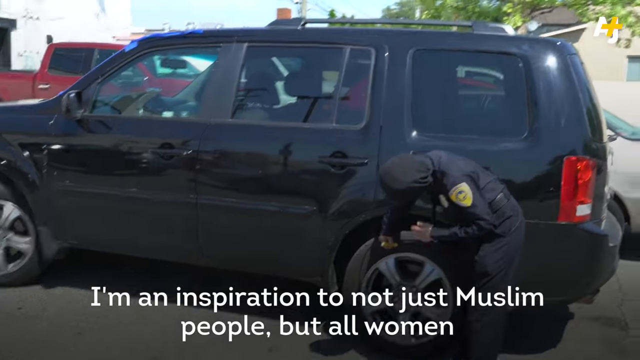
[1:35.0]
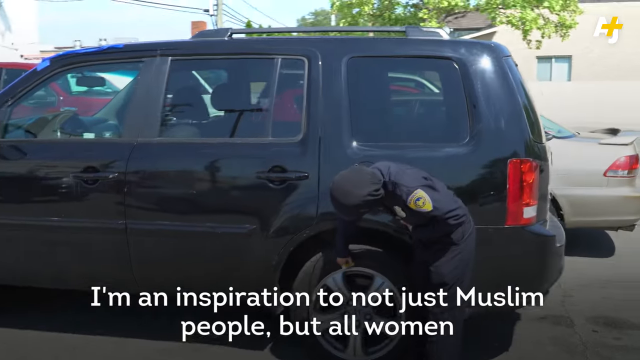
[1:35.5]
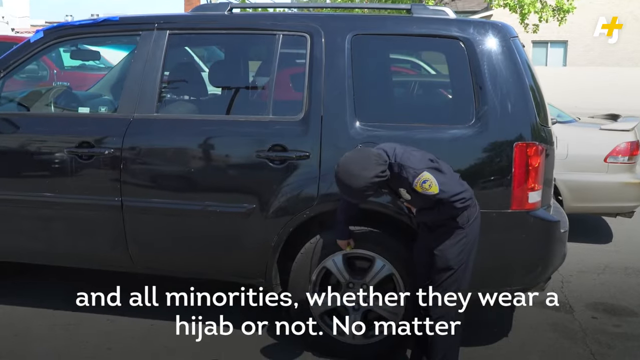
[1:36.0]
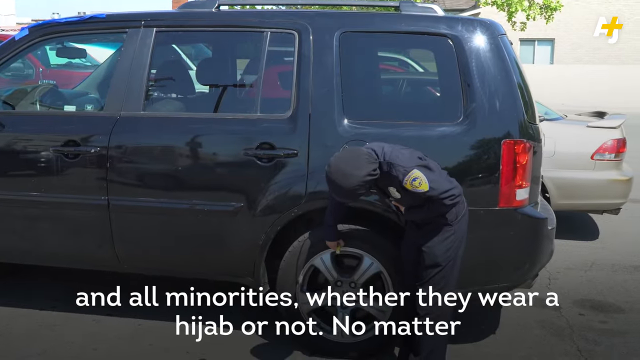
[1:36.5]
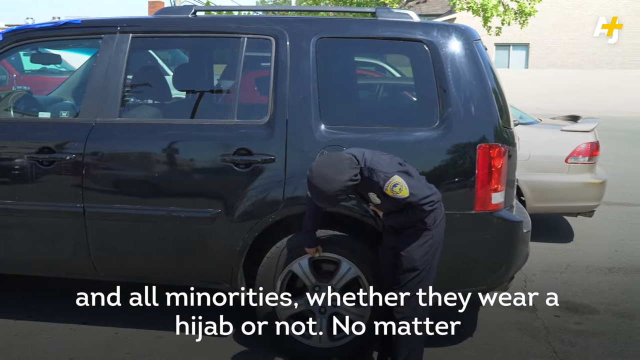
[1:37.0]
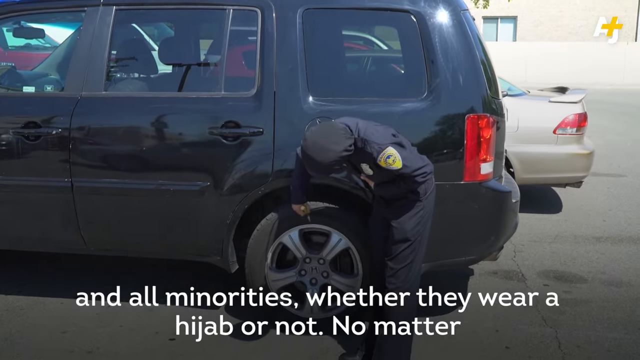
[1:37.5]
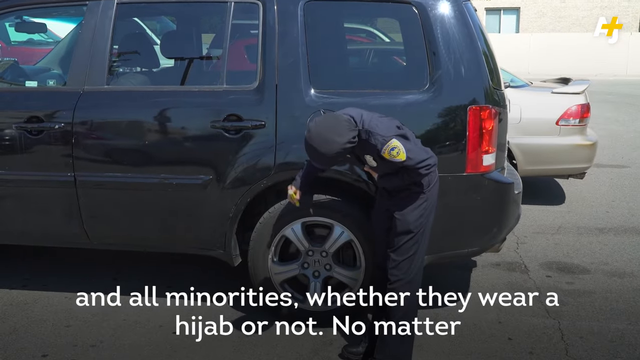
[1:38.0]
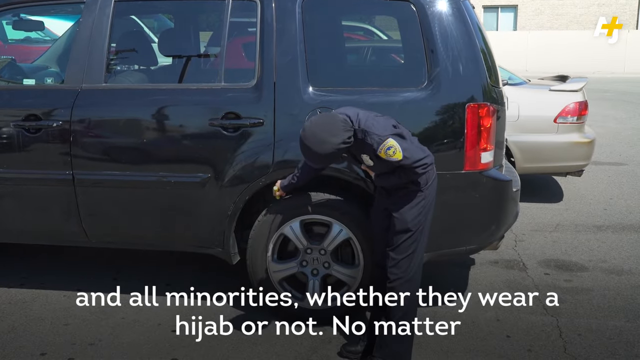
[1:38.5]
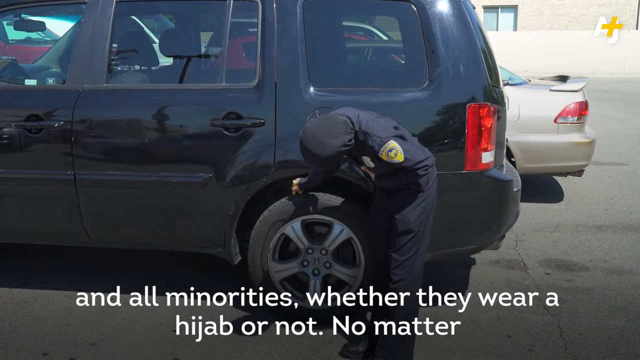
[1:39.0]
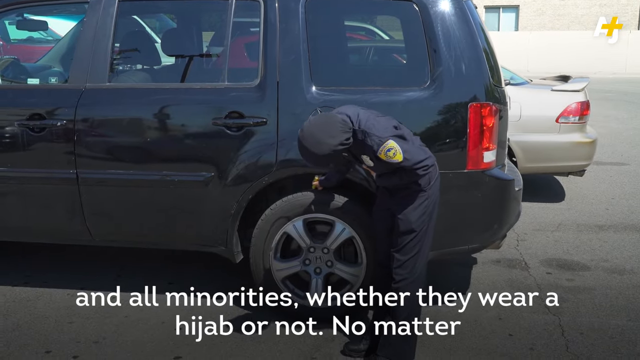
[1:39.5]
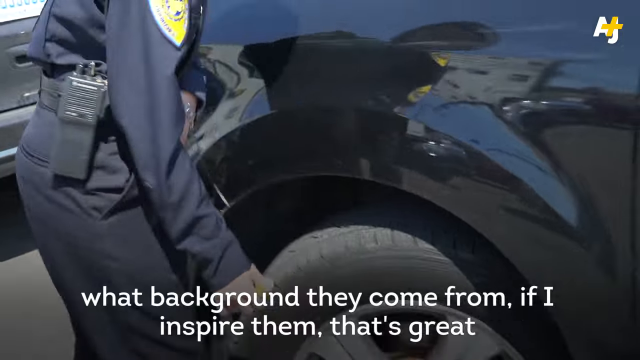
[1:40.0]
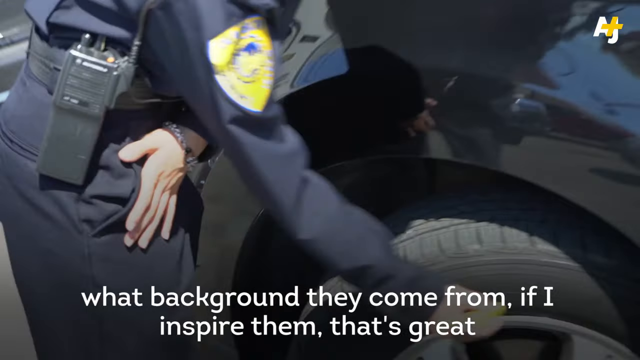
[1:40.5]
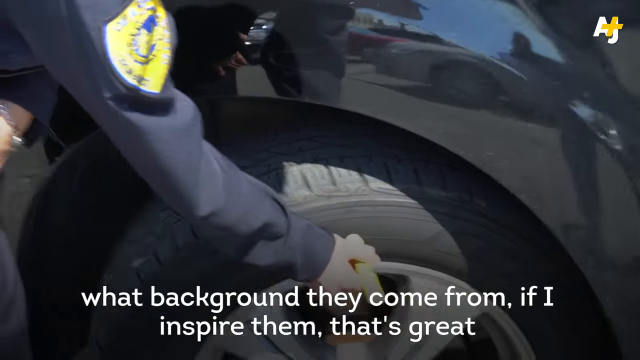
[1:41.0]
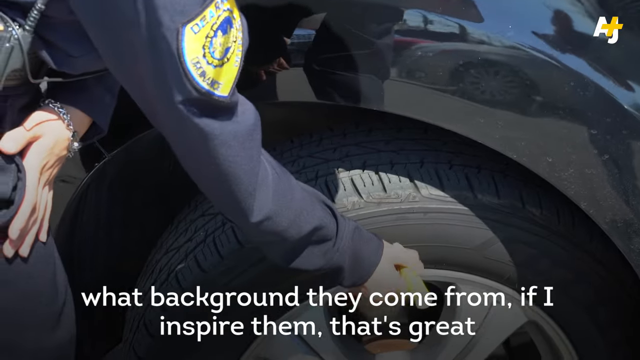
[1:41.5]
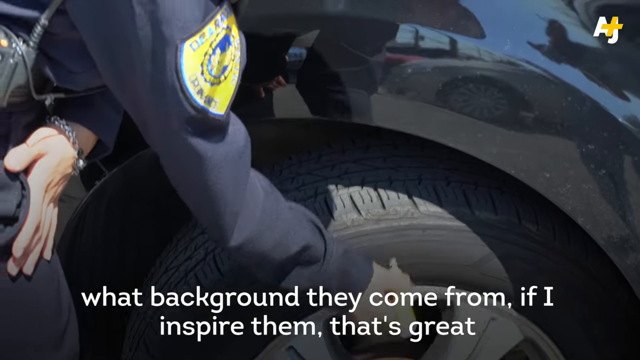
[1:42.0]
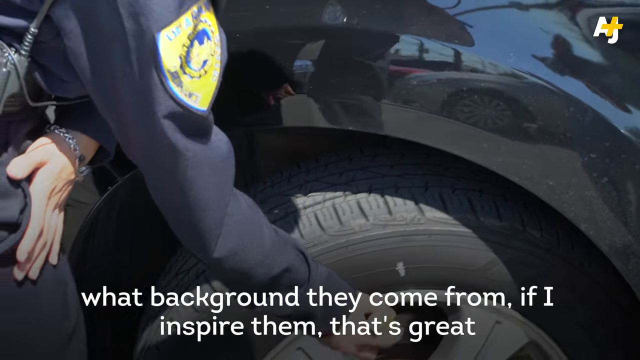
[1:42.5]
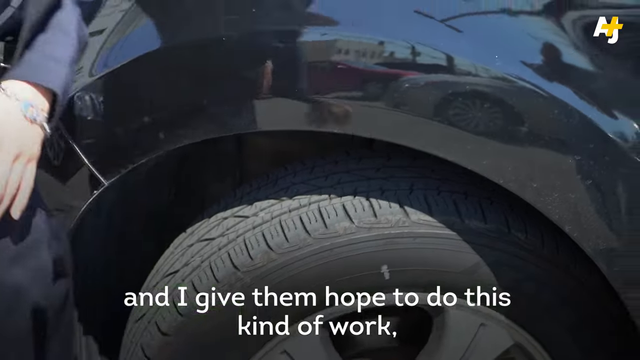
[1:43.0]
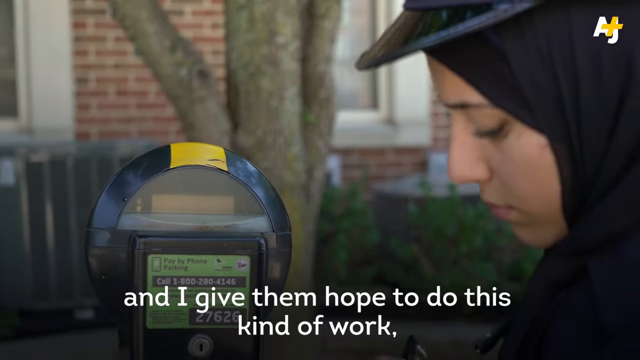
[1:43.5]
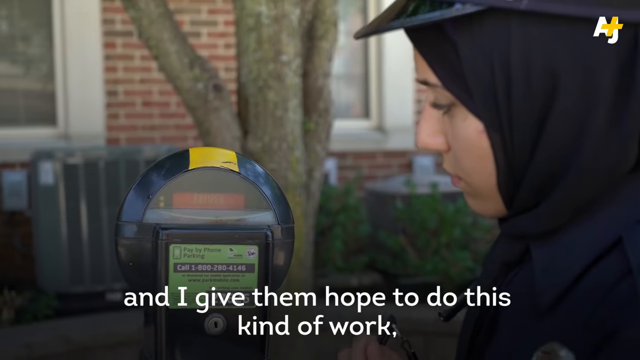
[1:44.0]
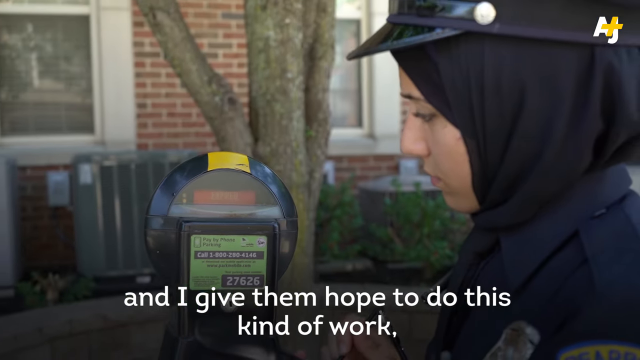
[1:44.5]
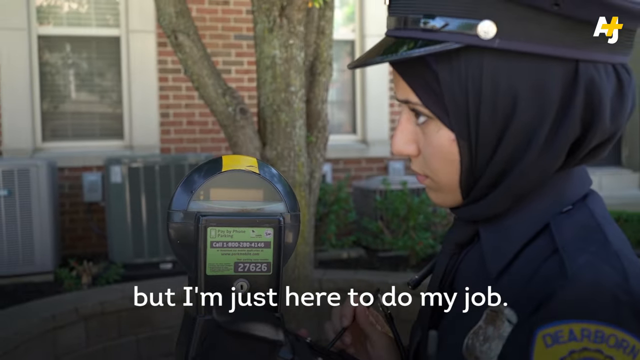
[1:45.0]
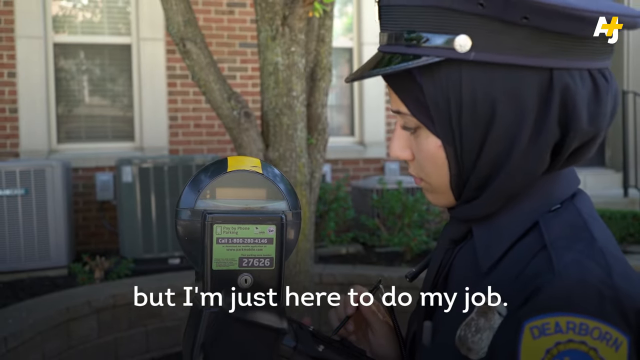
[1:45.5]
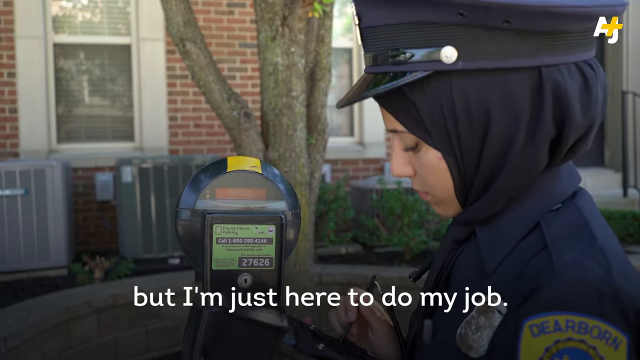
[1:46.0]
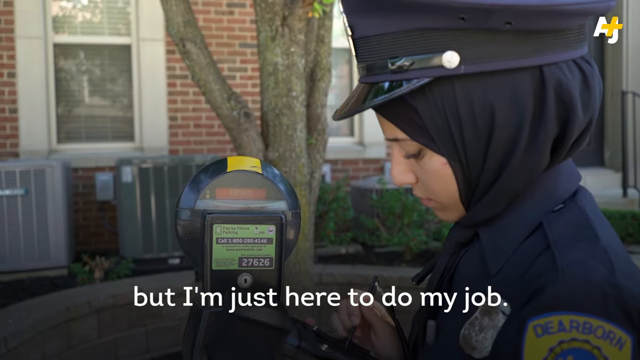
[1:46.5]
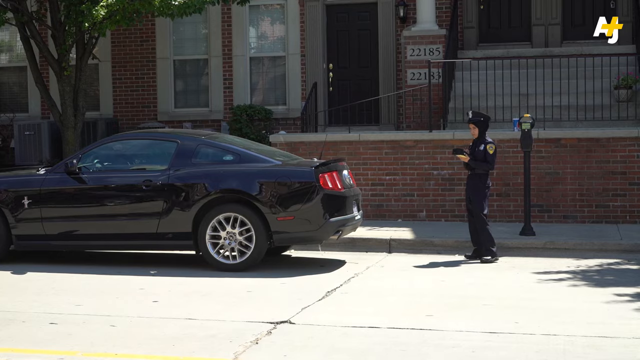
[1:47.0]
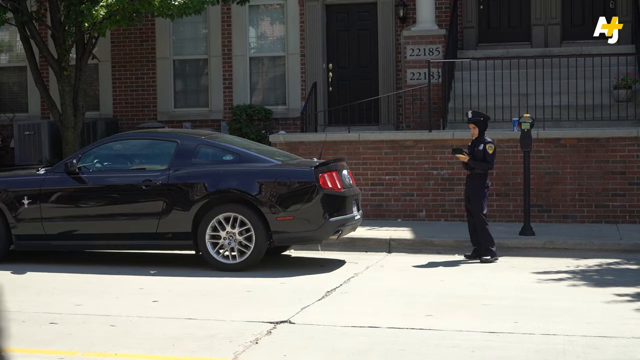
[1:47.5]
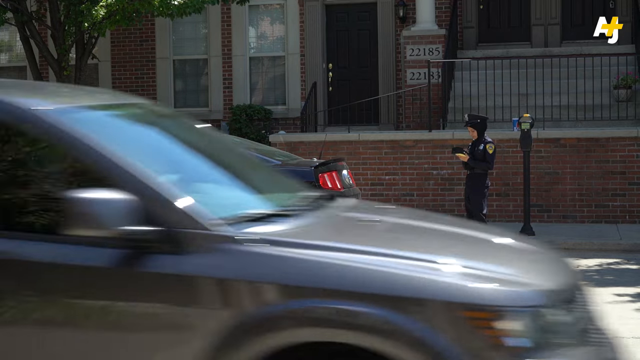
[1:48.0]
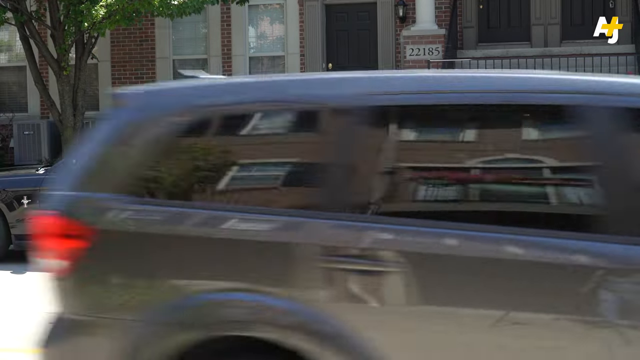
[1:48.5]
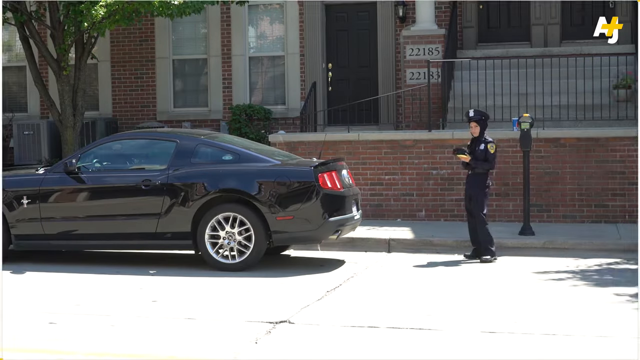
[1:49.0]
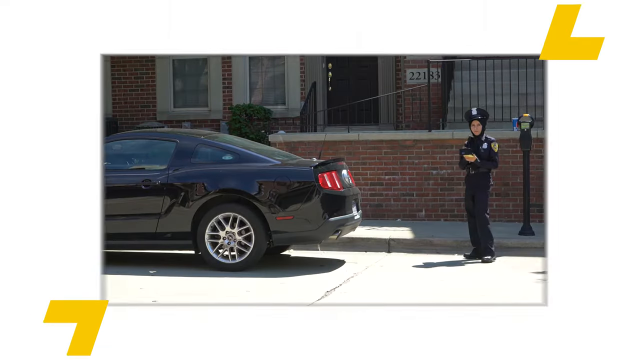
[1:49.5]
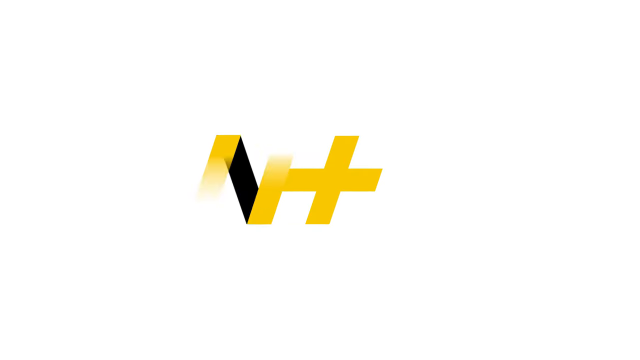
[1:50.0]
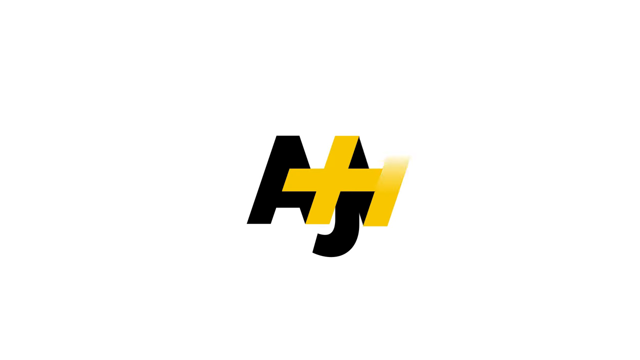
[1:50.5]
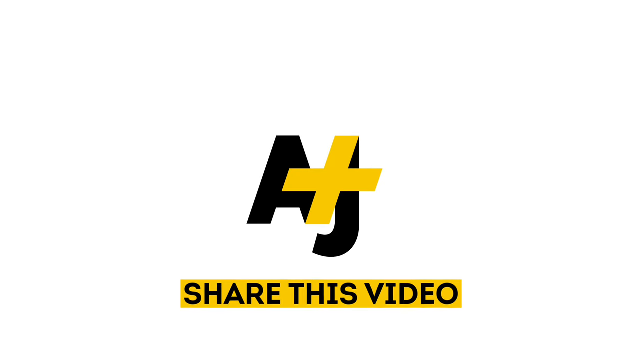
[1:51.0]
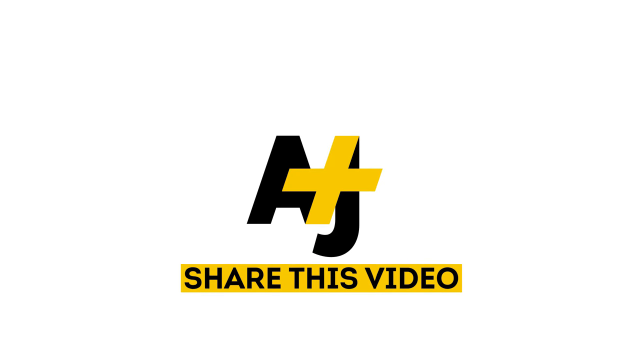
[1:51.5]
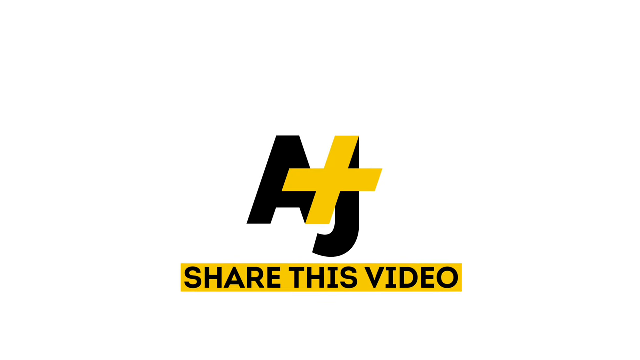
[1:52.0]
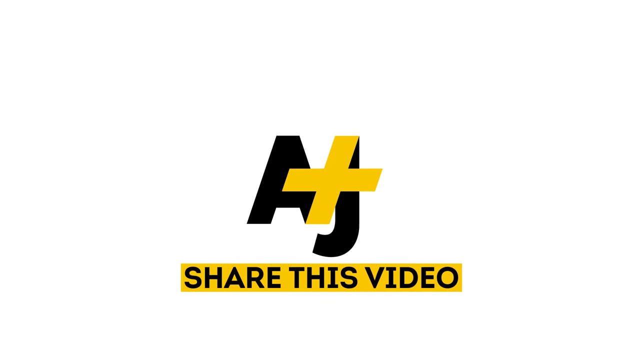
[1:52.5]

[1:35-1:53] Captions at the bottom read "all minorities, whether they wear a hijab or not, no matter what background they come from, if I inspire them, that's great. And I give them hope to do this kind of work. And I'm just here to do my job". Meanwhile she checks a car tire, apparently marking it with chalk, appears to check a parking meter, and writes a citation. The video then cuts to a white transition showing the channel it belongs to. The shots are filmed in daylight, apparently in the middle of a city.